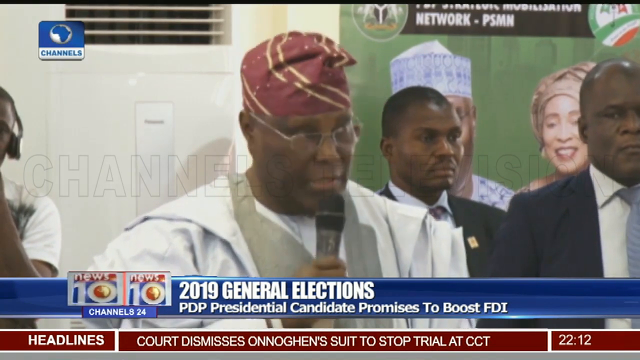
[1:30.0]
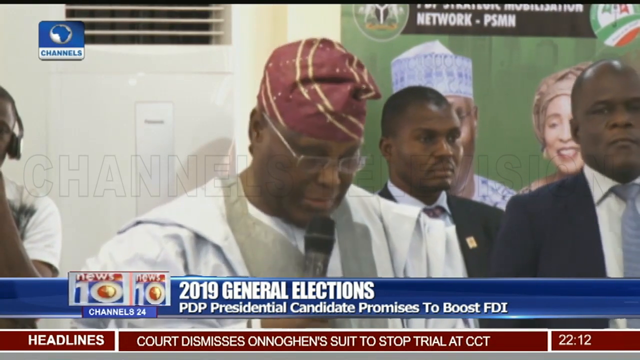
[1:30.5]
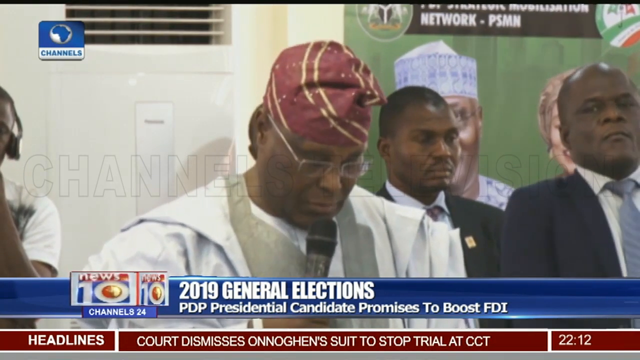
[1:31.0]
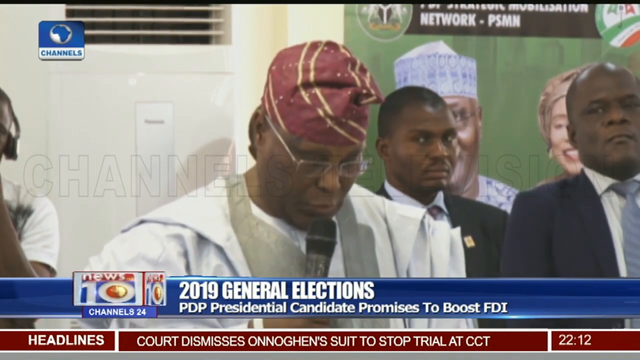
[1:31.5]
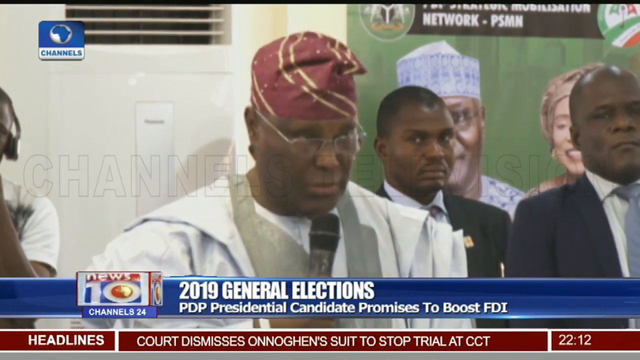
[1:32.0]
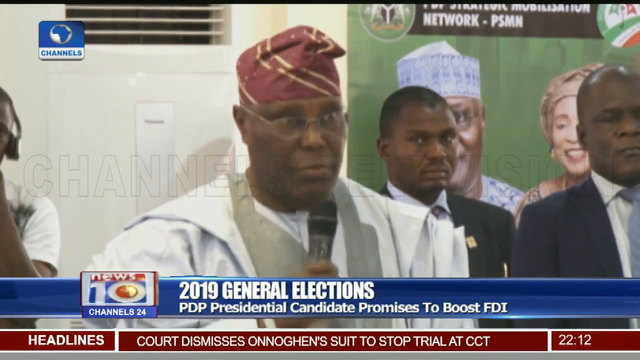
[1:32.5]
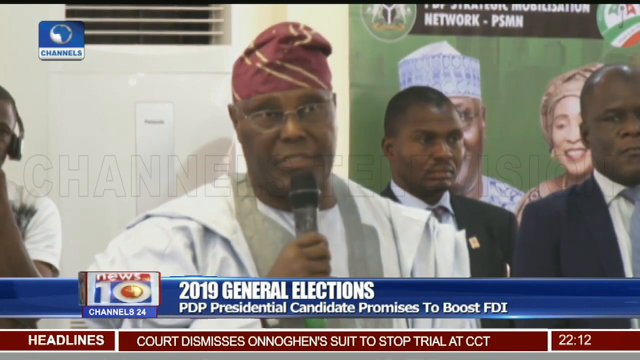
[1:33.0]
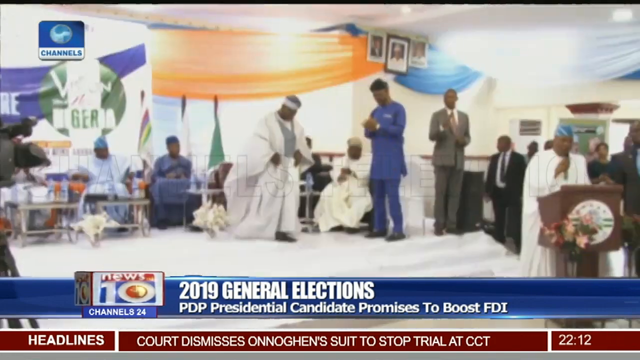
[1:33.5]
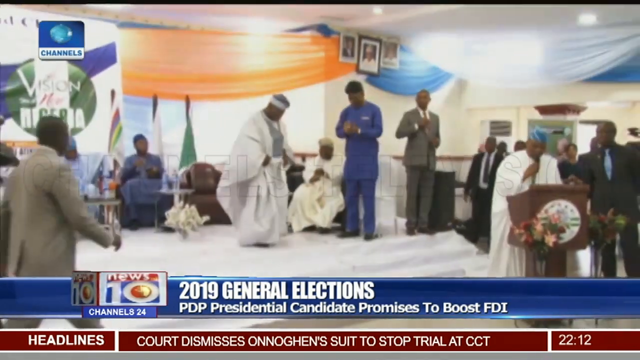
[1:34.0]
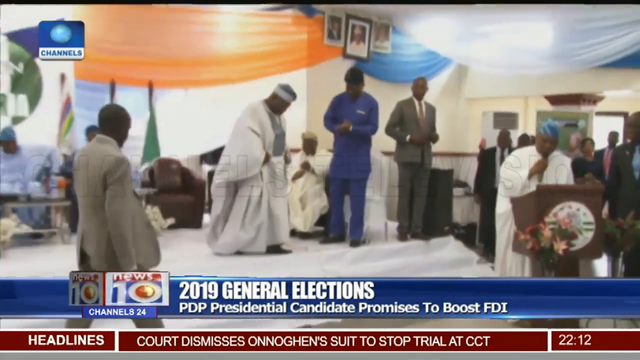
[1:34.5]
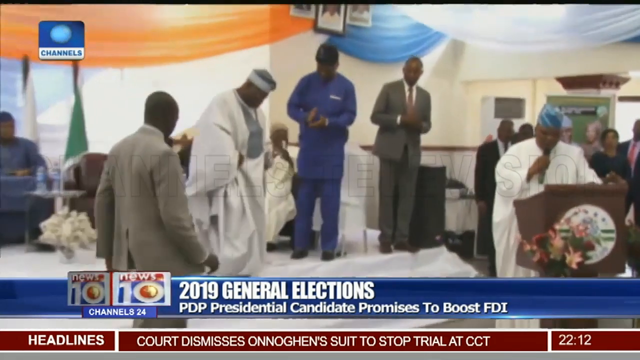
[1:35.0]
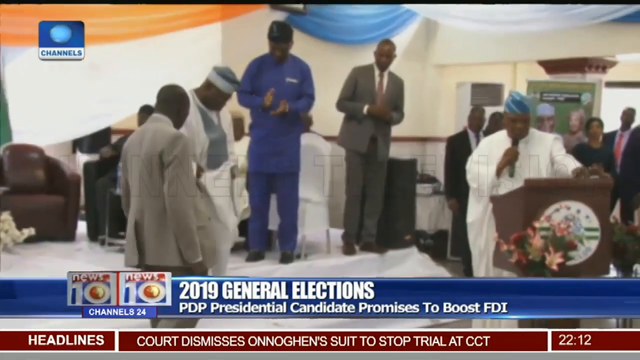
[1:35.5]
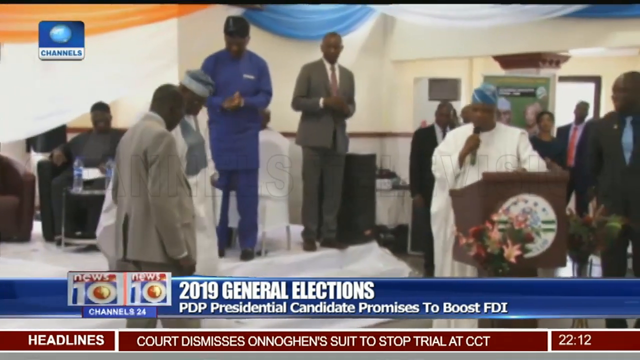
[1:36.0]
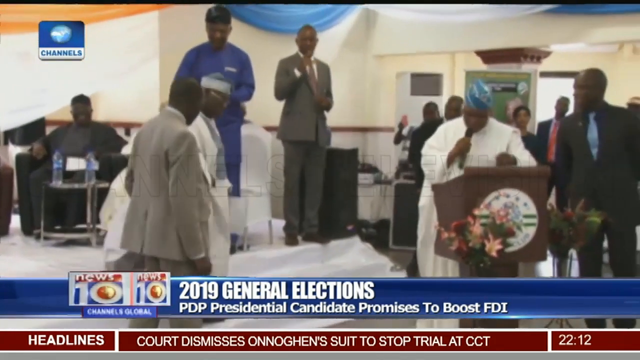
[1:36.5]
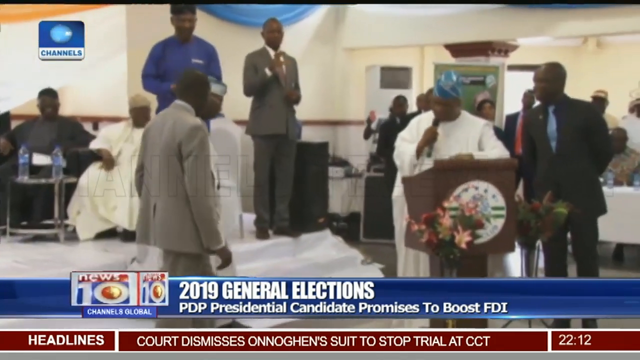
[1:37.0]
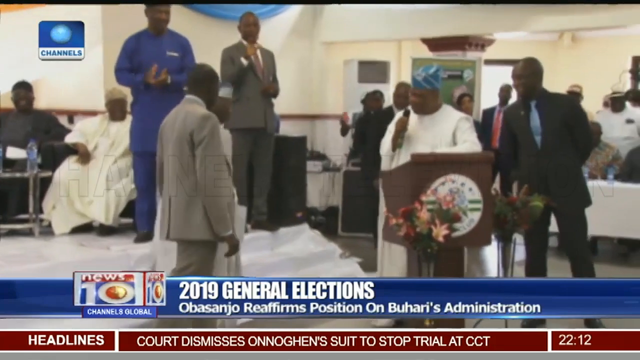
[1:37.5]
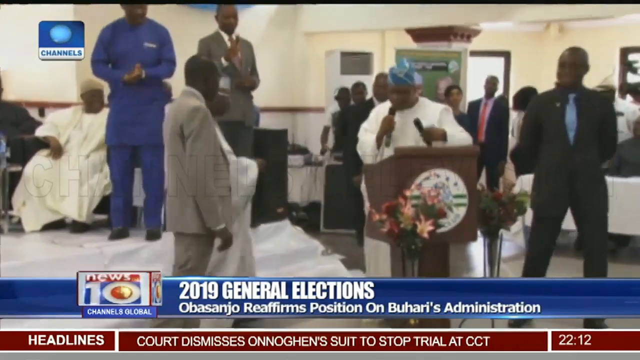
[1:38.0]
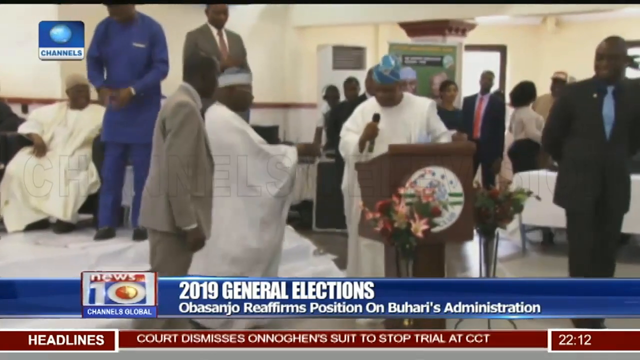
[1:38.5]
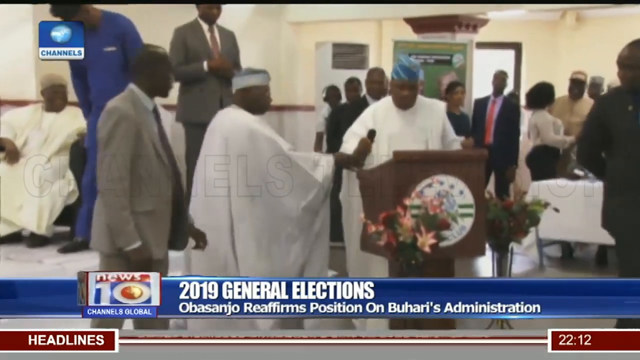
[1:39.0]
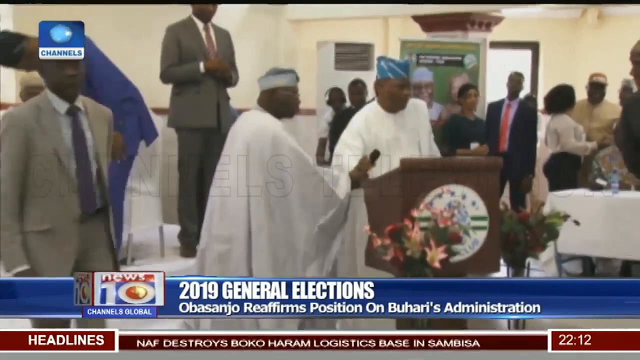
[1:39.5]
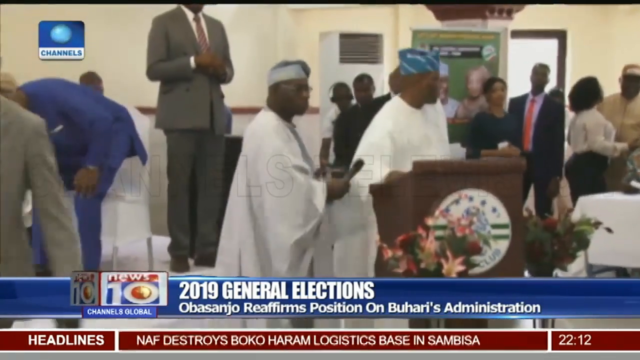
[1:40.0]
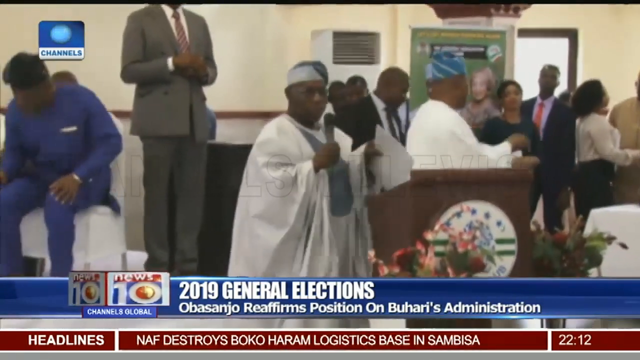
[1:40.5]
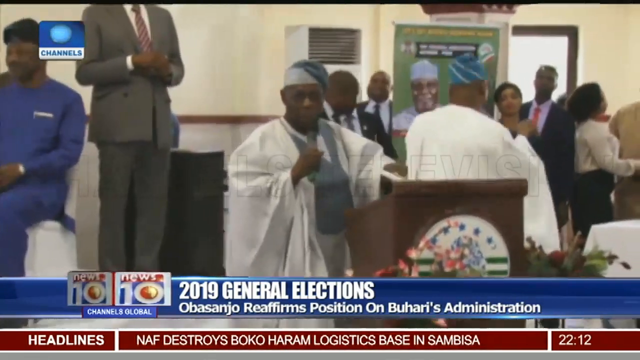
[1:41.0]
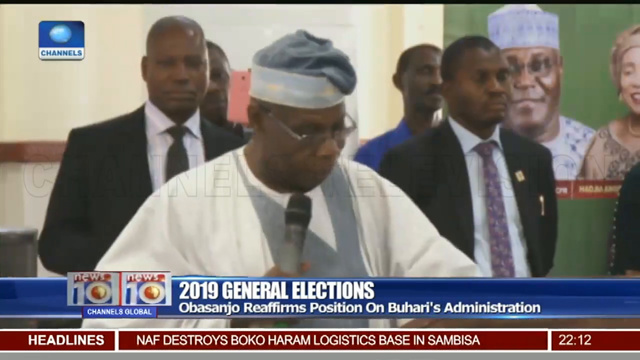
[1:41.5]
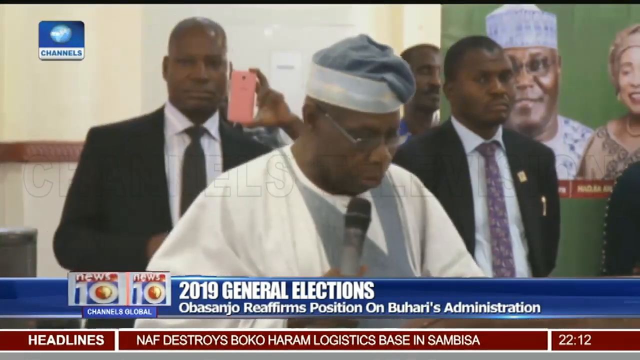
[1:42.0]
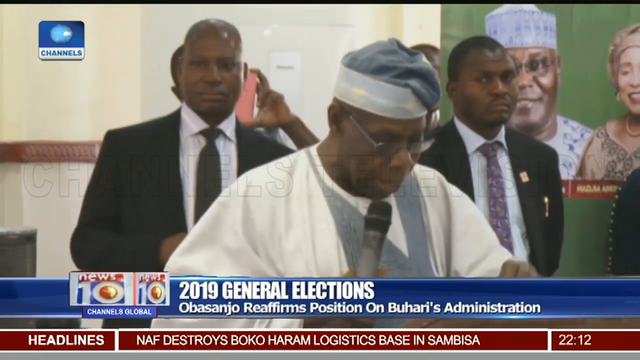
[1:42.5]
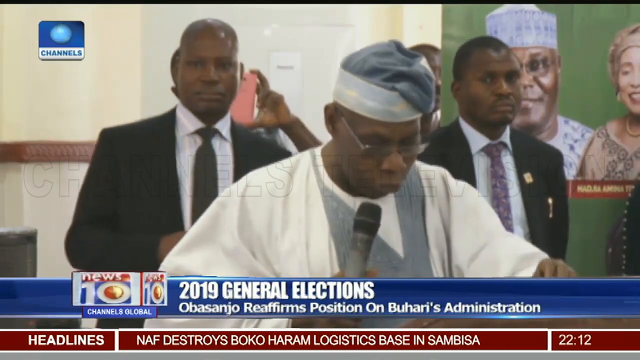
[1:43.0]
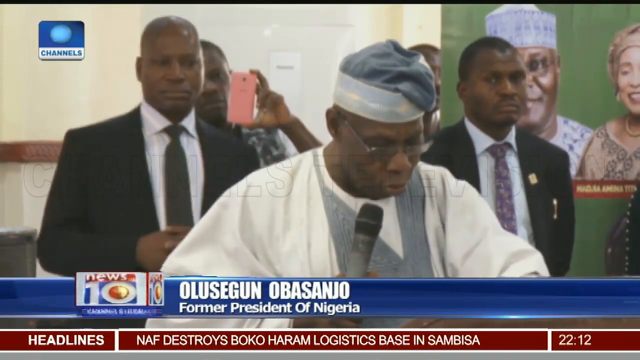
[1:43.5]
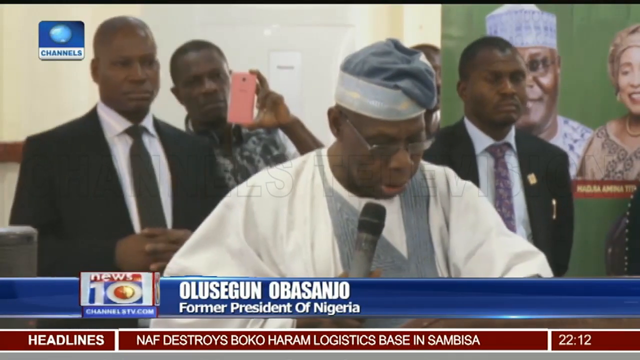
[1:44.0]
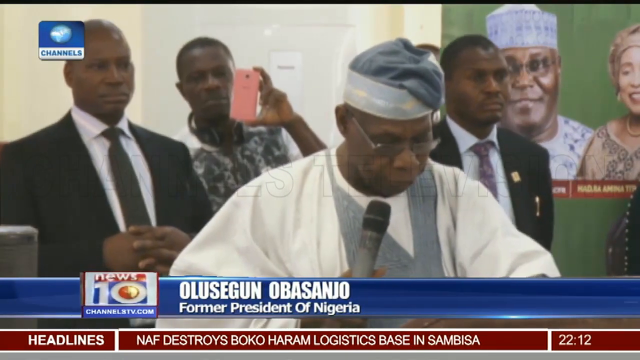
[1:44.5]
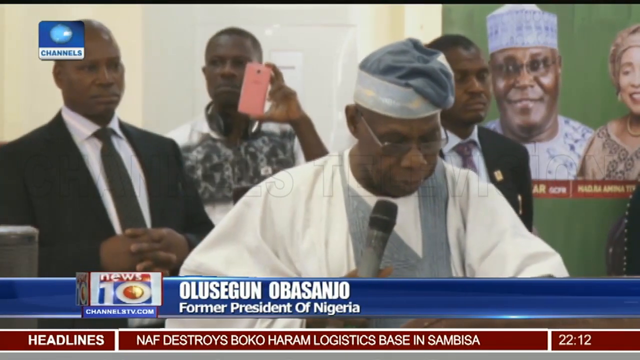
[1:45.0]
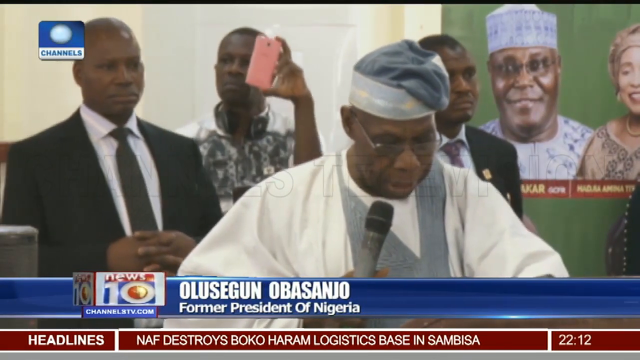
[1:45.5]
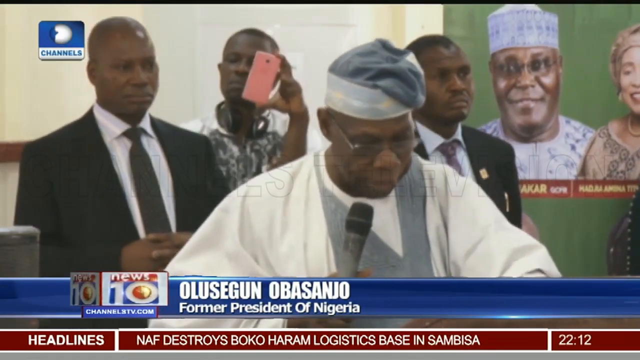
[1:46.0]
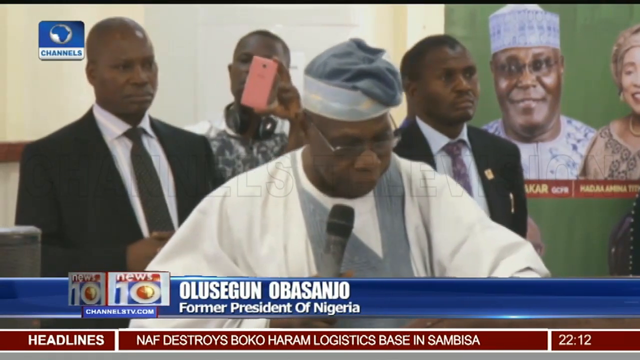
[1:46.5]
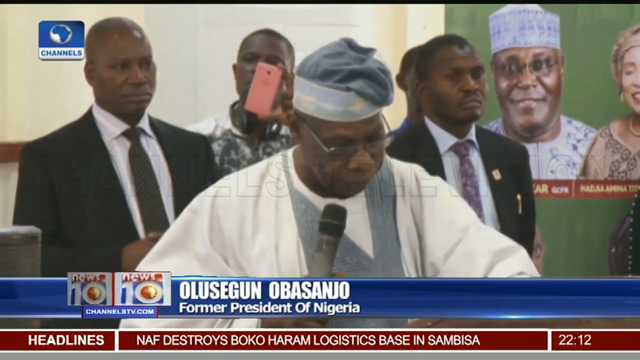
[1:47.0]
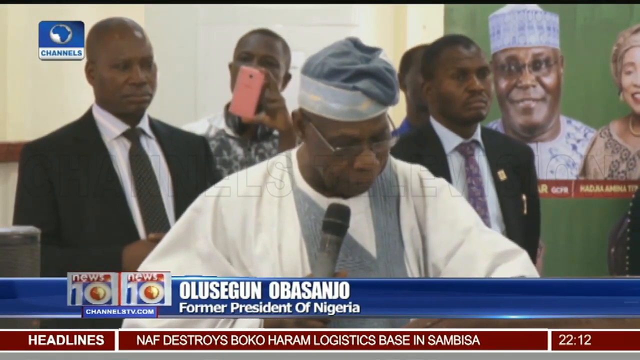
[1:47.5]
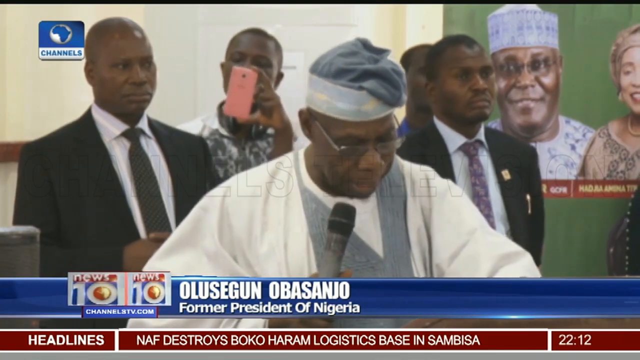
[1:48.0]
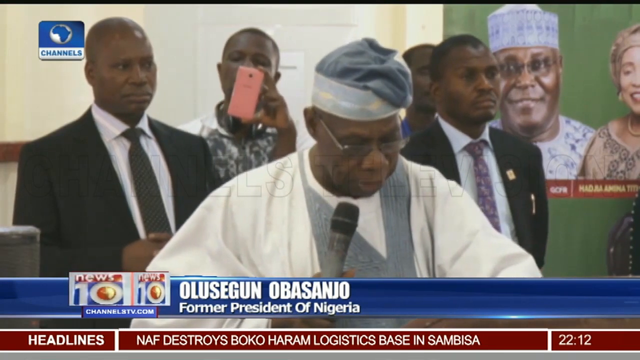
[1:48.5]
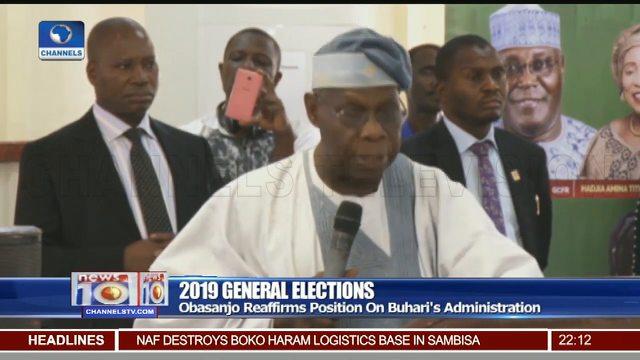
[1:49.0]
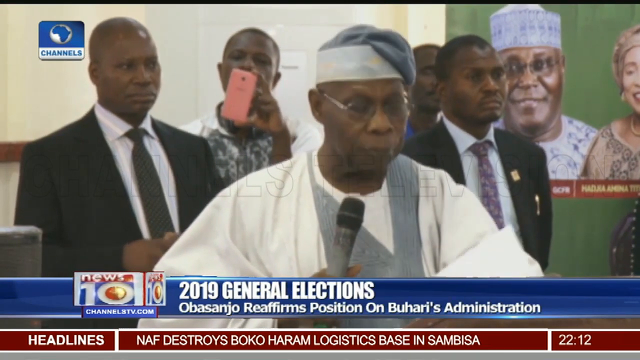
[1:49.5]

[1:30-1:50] There is a mirror, apparently a TV. There is a picture of a woman wearing a white dress and eyeglasses, and next to her a man in a white t-shirt, possibly Atiku Apakari. Everyone smiles. Nearby is a security man in a black suit who looks strong and never smiles. At the back there appears to be a window. A lot of people are around, supportive and nicely dressed, most of them women.